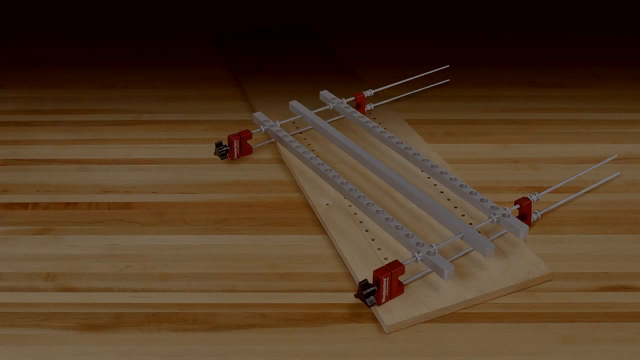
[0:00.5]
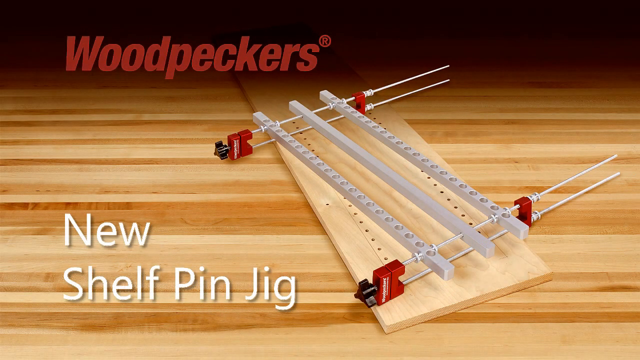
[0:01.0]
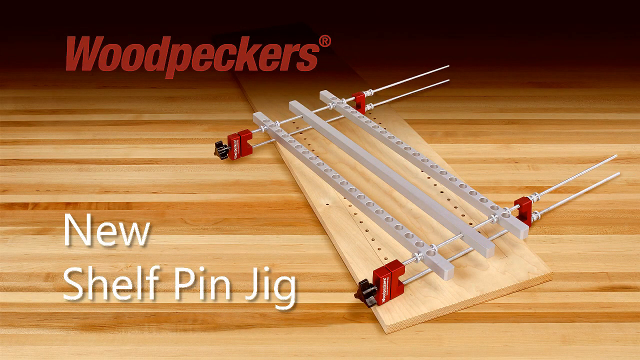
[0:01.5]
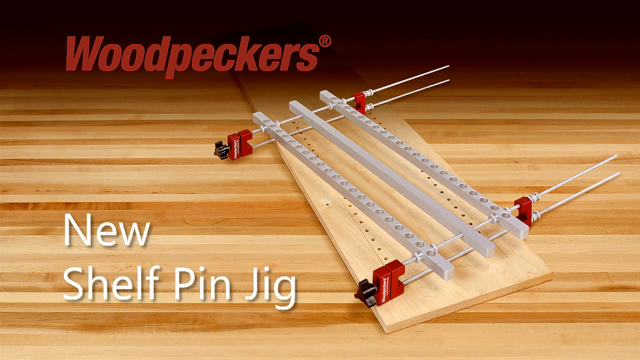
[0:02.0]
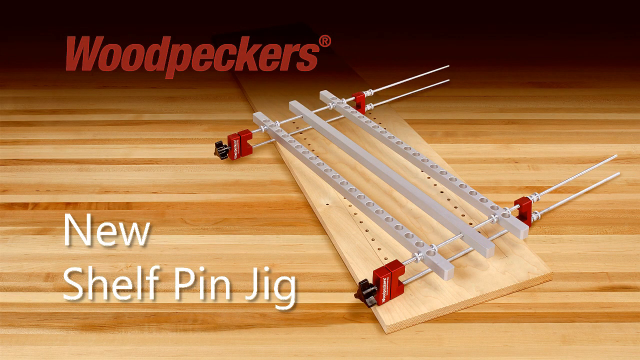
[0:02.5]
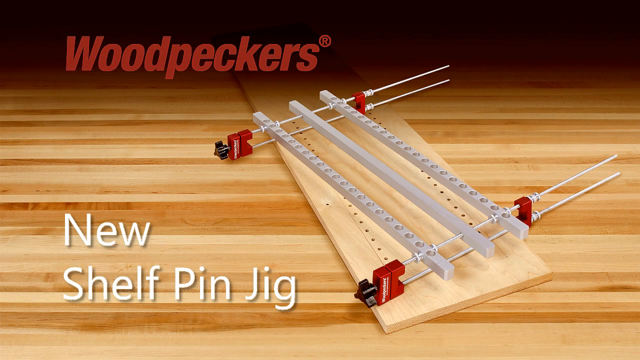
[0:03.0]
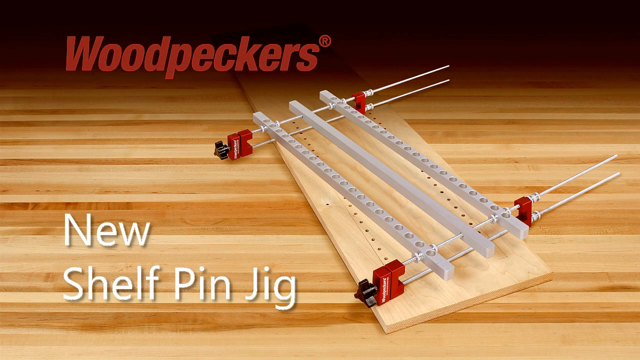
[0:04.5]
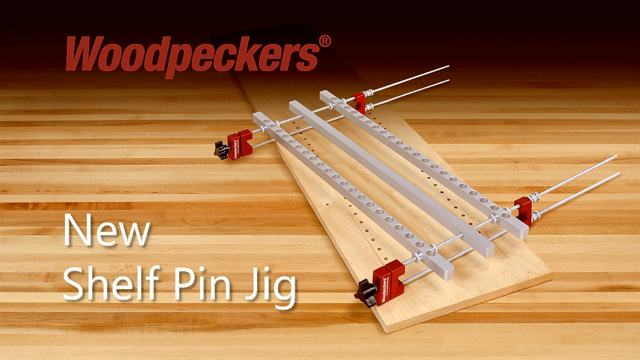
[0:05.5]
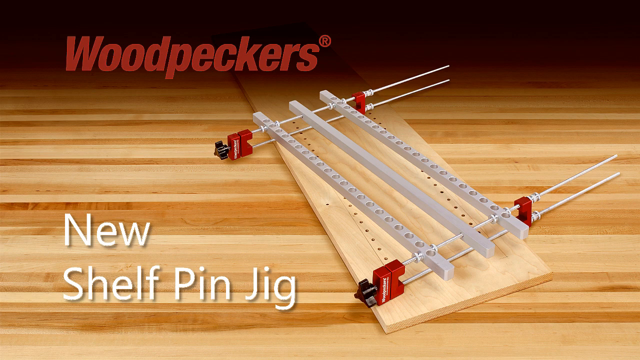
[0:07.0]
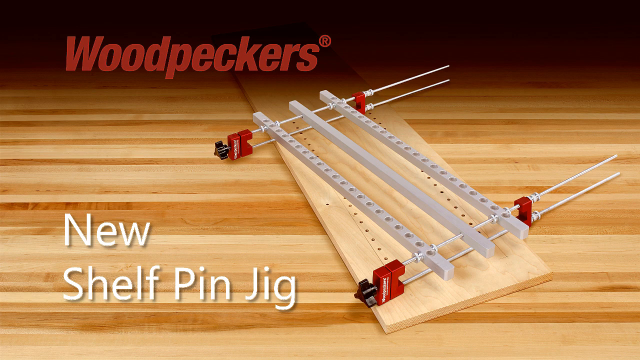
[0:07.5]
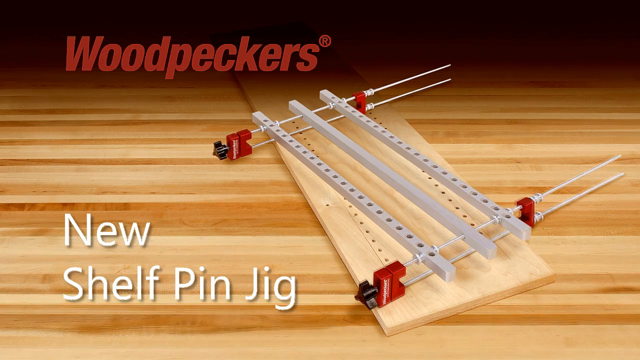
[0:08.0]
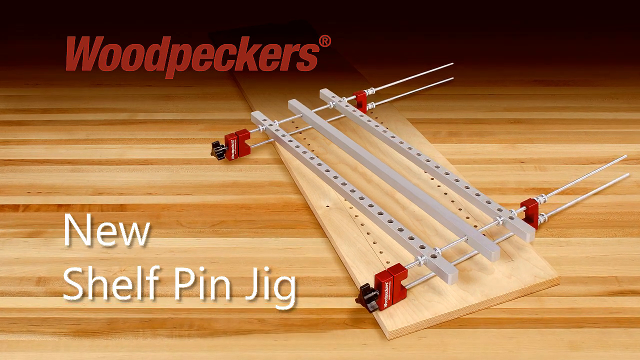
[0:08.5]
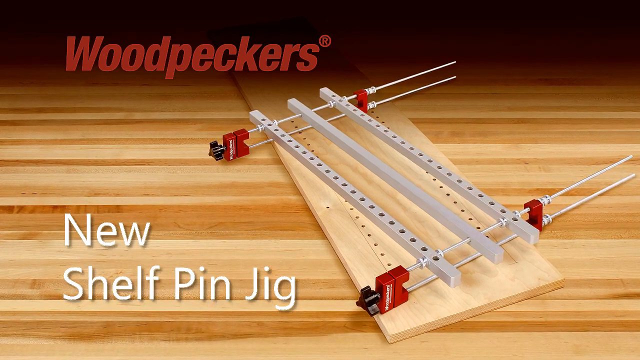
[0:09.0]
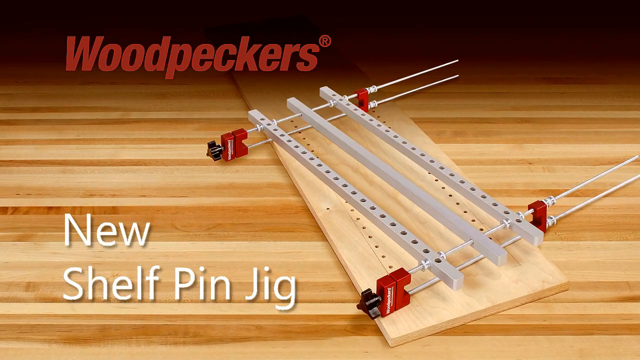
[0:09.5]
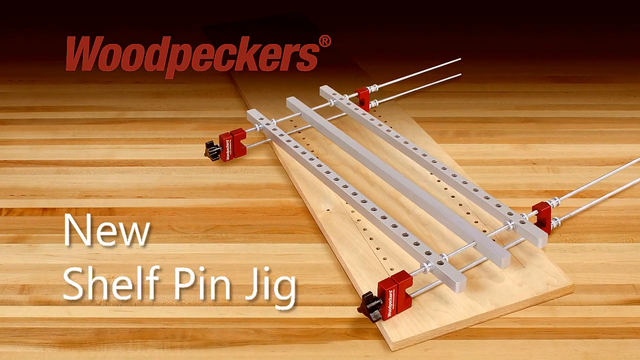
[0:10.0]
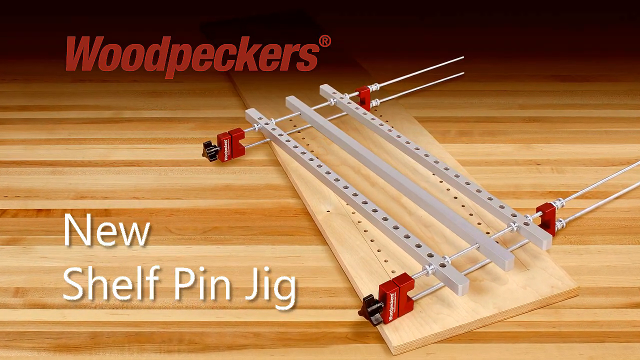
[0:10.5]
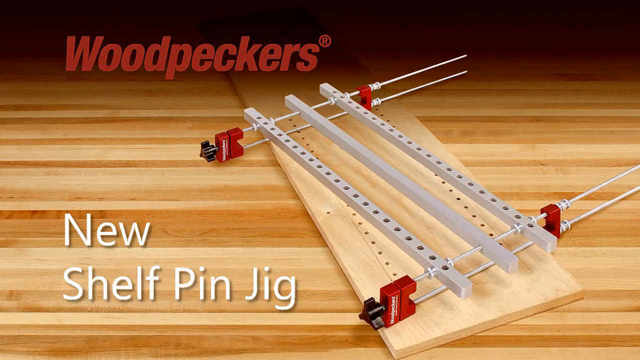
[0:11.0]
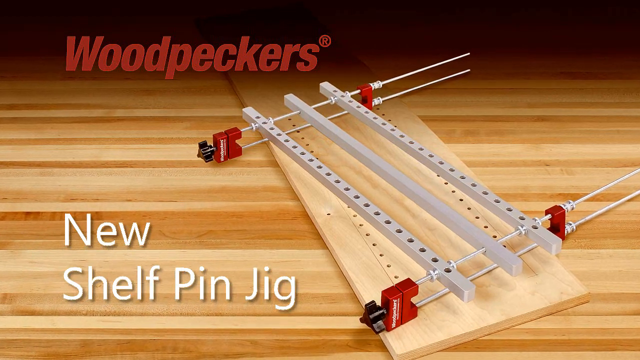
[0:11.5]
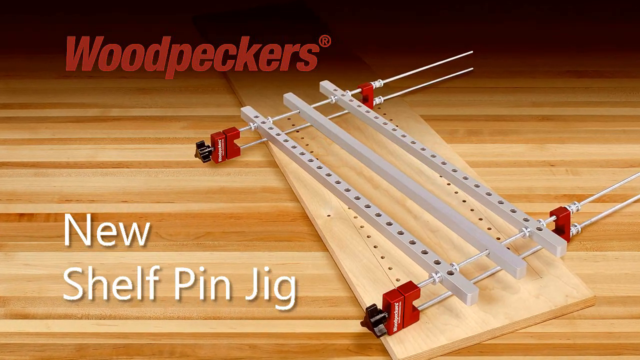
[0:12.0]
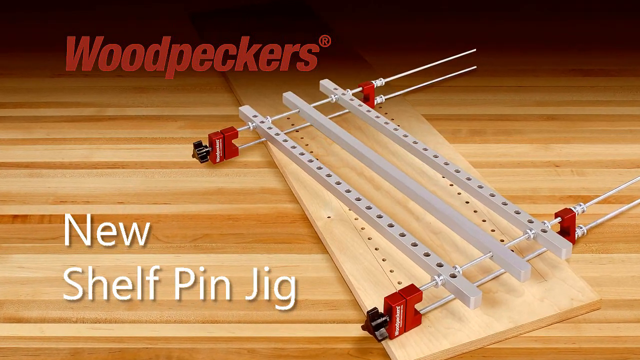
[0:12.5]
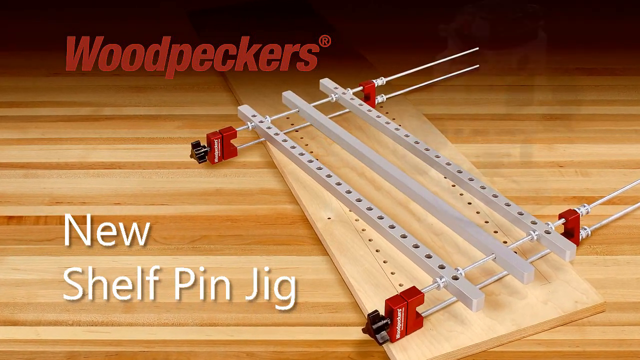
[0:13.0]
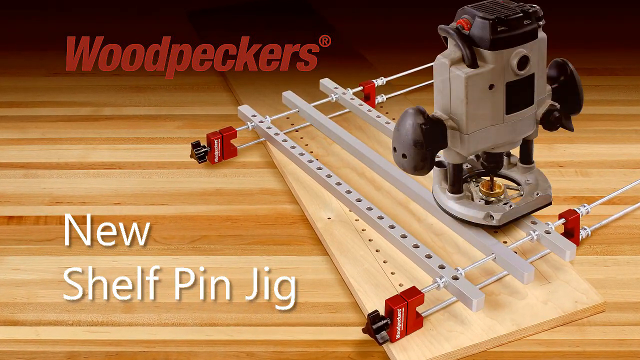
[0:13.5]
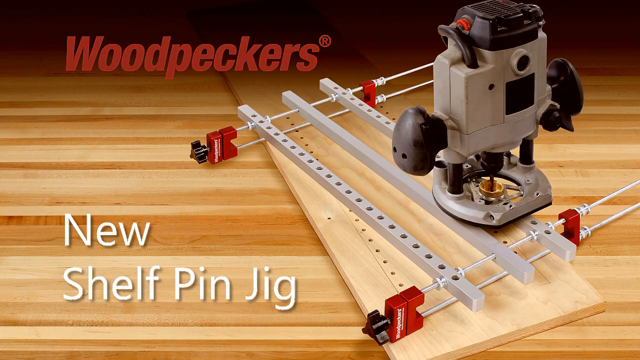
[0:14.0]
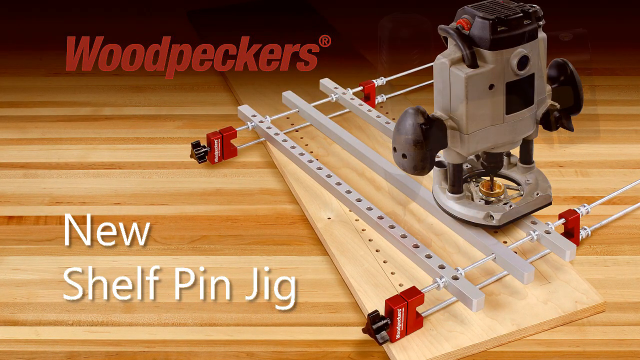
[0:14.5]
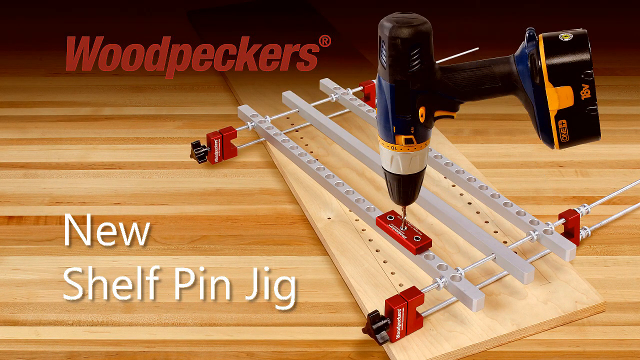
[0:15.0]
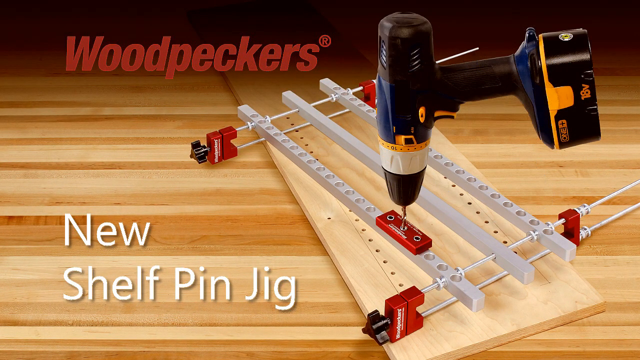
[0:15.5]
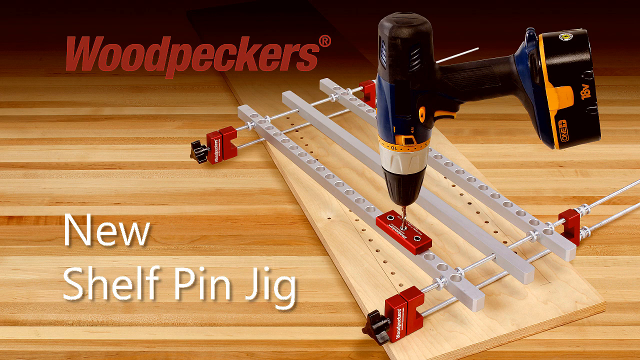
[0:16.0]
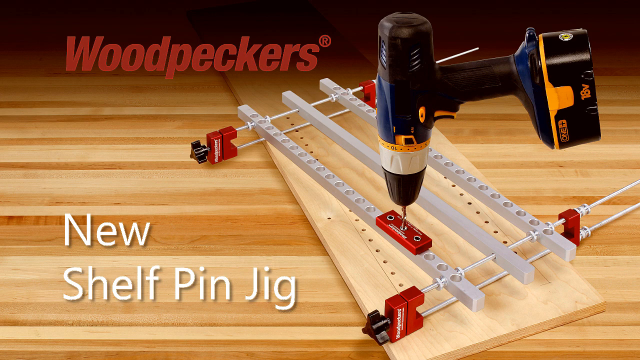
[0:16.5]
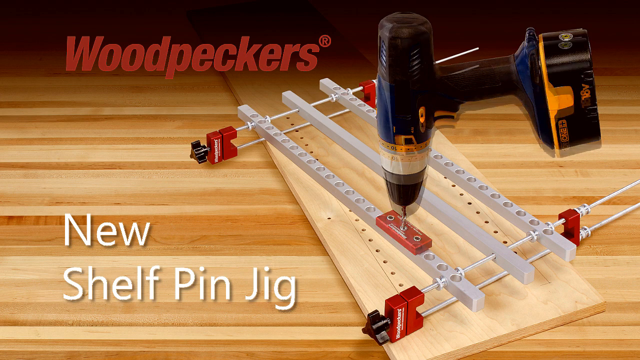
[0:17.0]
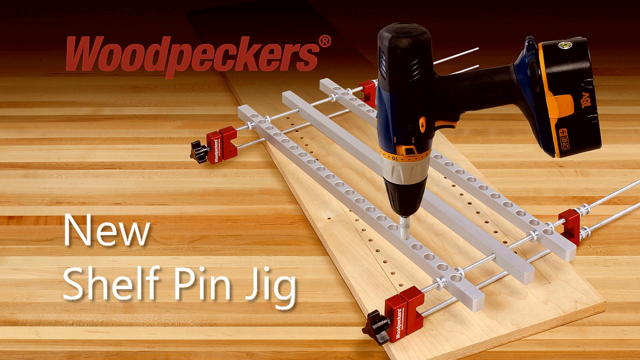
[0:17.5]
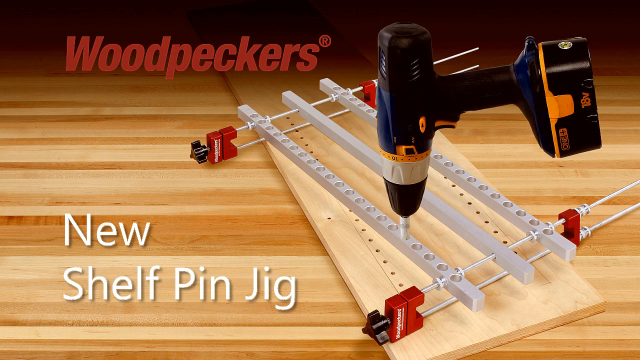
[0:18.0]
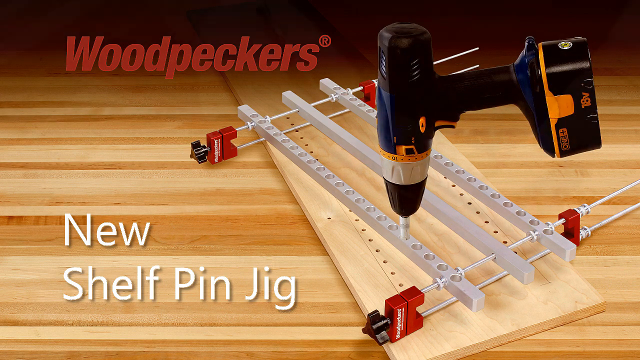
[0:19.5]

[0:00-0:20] The video shows Woodpecker's new shelf pin jig, a metal contraption. Three metal bars, which must be the jig, are held together with rods on either side; the top and bottom bars have holes in them and the middle one is solid, and the side pieces run through the metal bars. The video then shows how it can be used with a drill: another piece of equipment that attaches to the jig, which looks like a press drill, and then a regular standard drill is shown being used with it. A logo appears in the bottom right corner: a red square with "woodpeckers" on the diagonal.